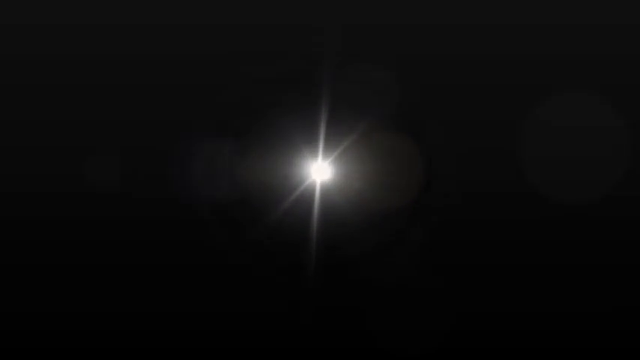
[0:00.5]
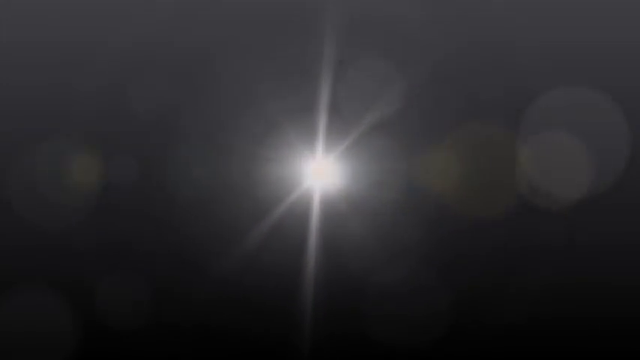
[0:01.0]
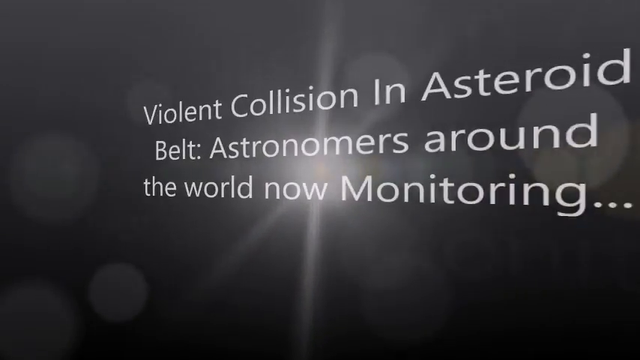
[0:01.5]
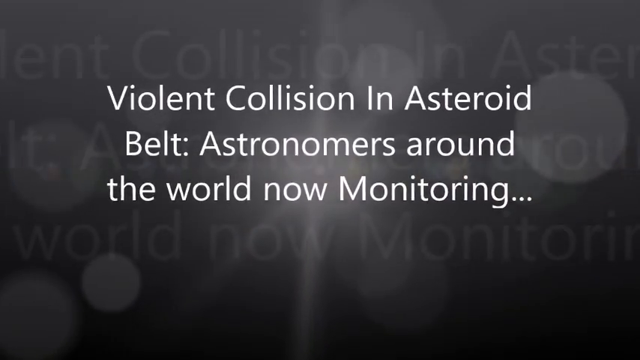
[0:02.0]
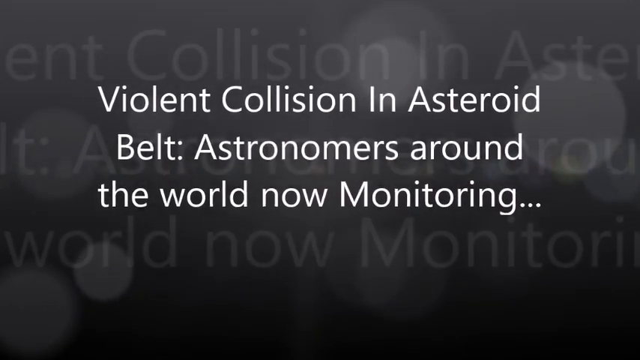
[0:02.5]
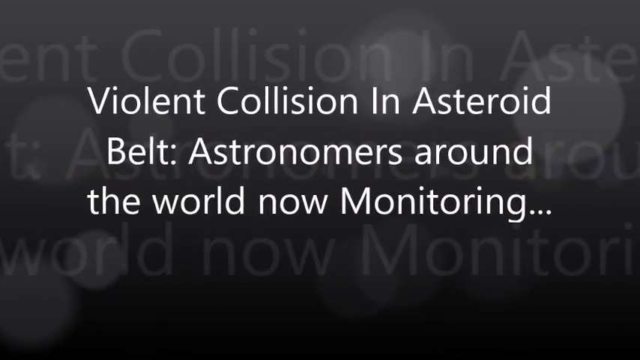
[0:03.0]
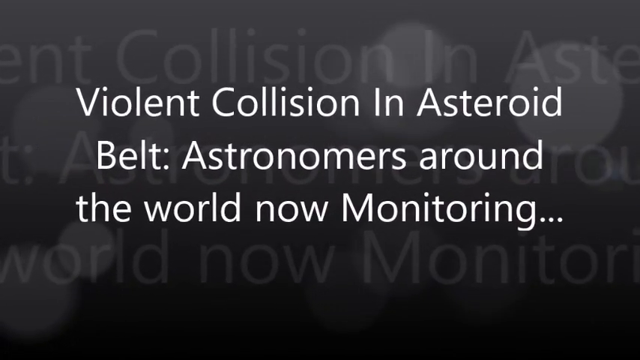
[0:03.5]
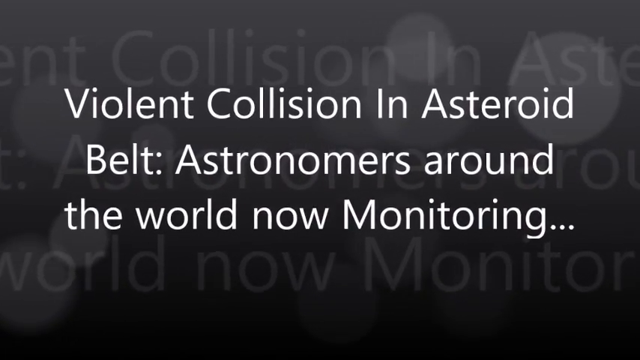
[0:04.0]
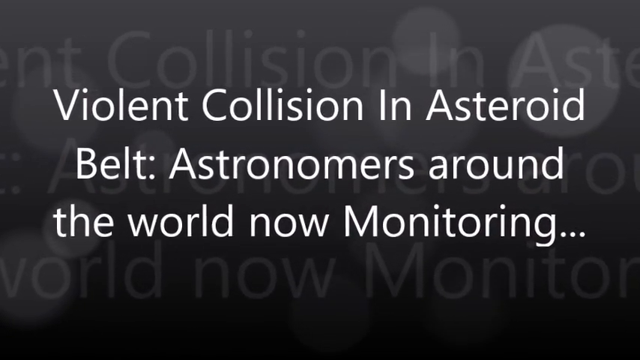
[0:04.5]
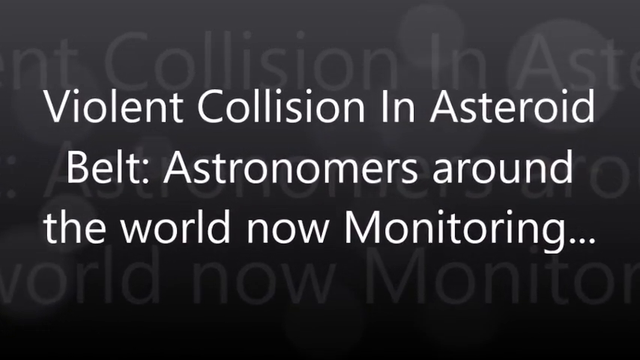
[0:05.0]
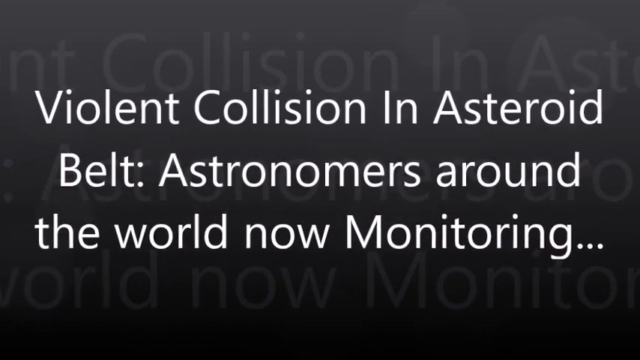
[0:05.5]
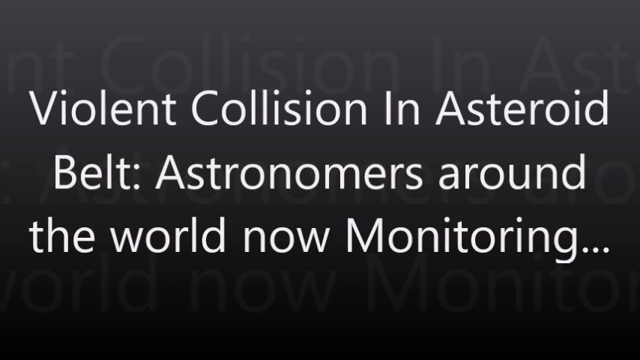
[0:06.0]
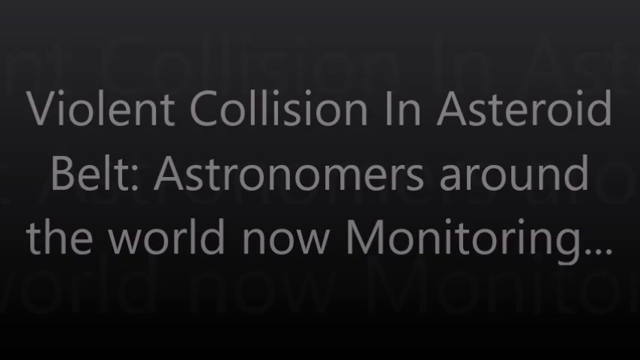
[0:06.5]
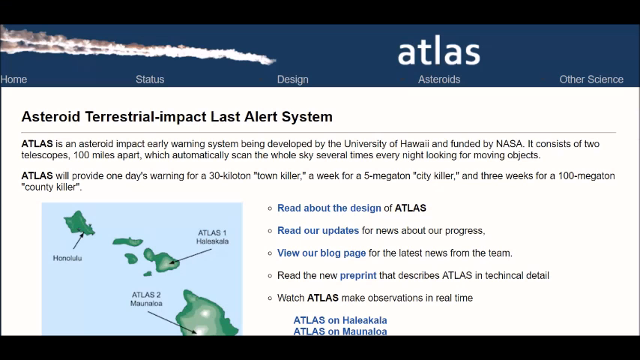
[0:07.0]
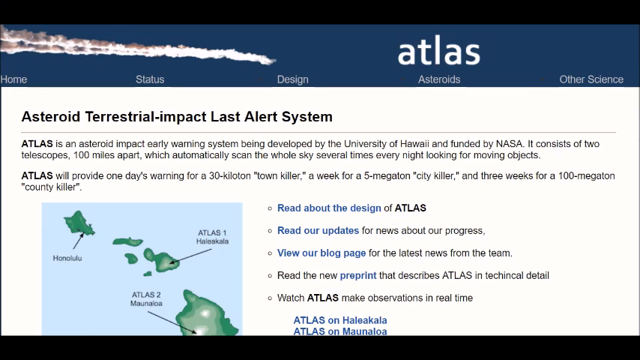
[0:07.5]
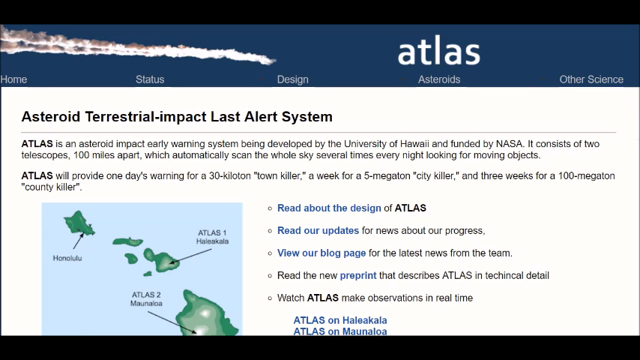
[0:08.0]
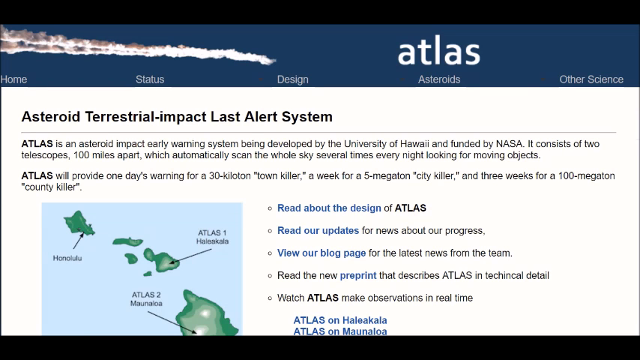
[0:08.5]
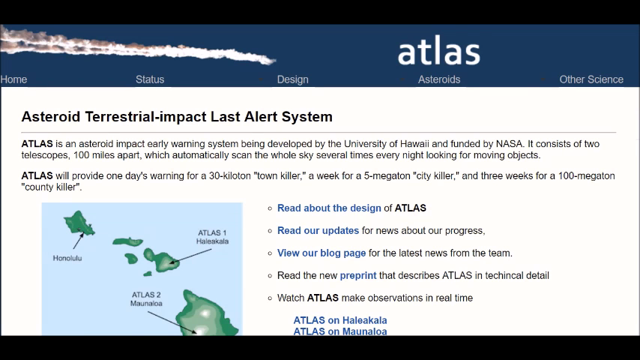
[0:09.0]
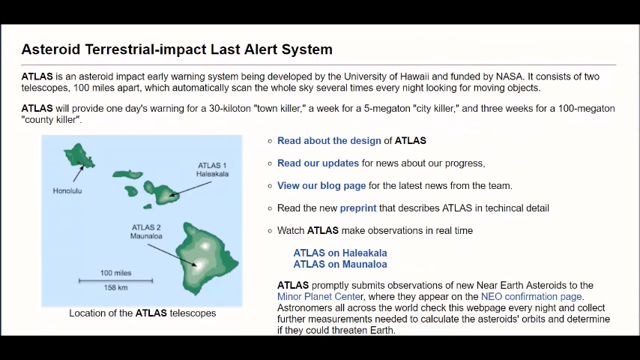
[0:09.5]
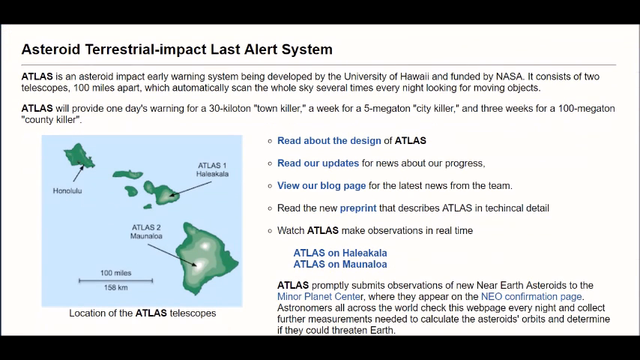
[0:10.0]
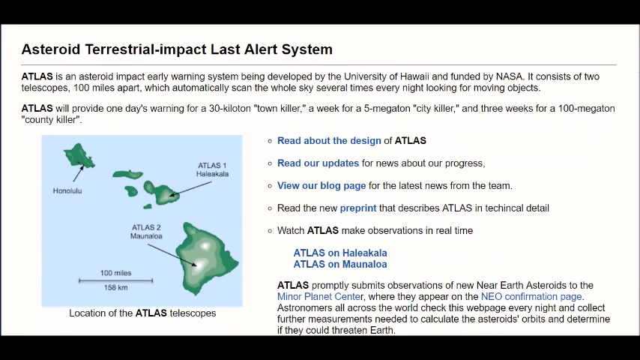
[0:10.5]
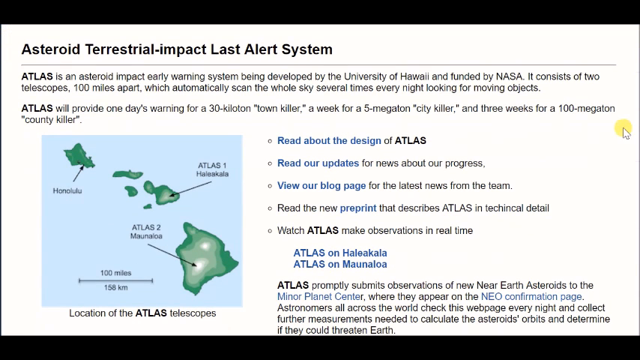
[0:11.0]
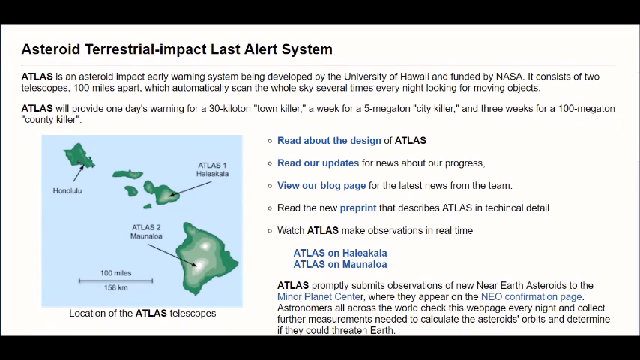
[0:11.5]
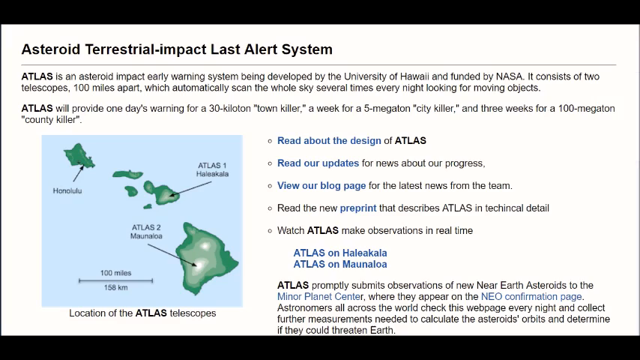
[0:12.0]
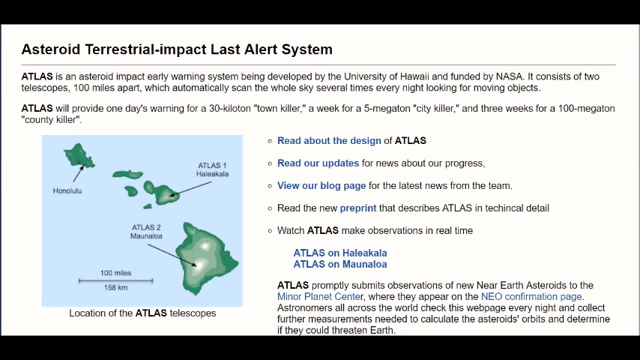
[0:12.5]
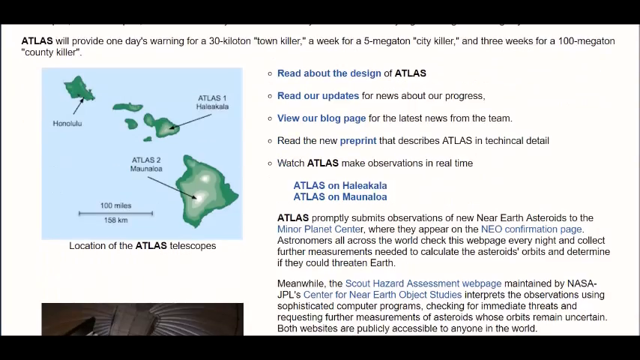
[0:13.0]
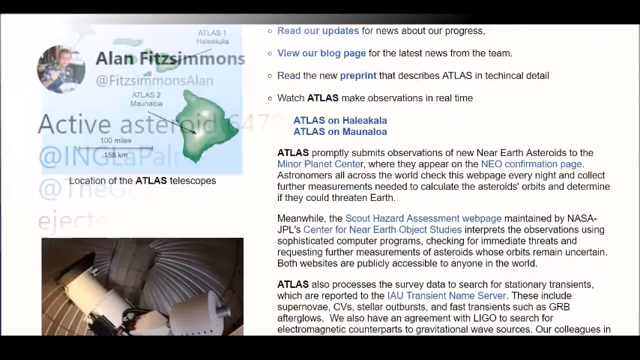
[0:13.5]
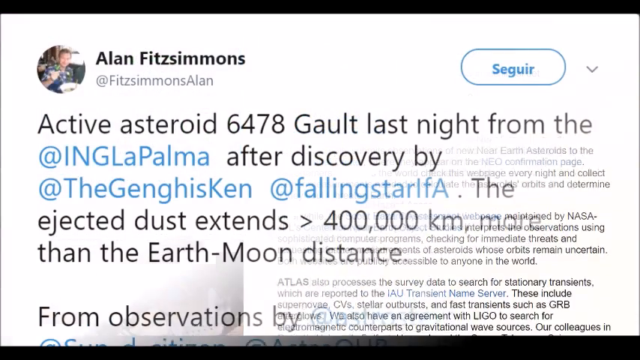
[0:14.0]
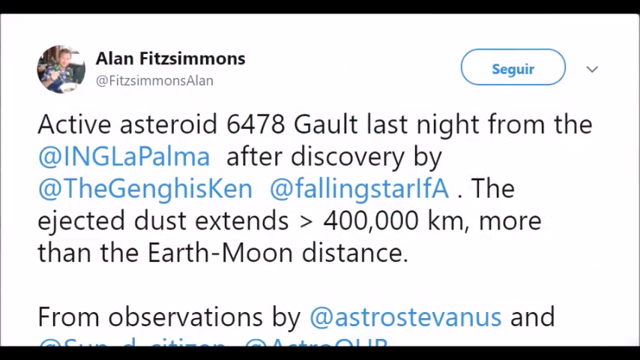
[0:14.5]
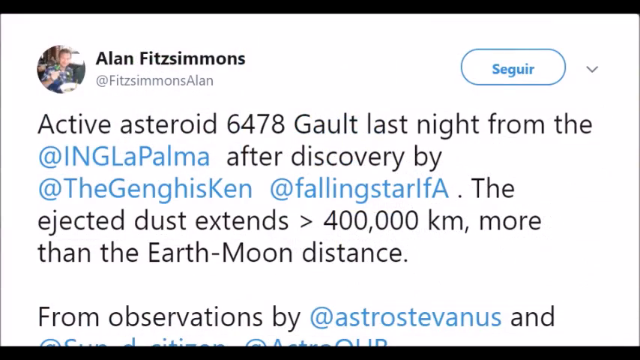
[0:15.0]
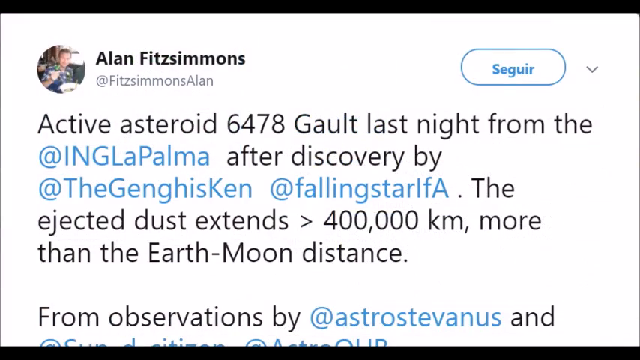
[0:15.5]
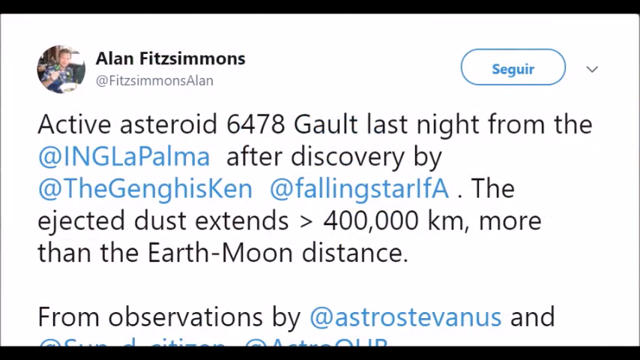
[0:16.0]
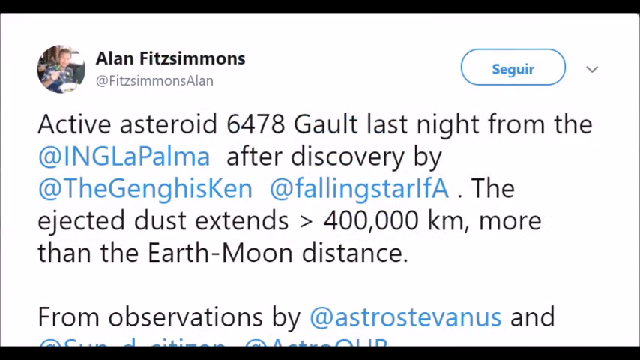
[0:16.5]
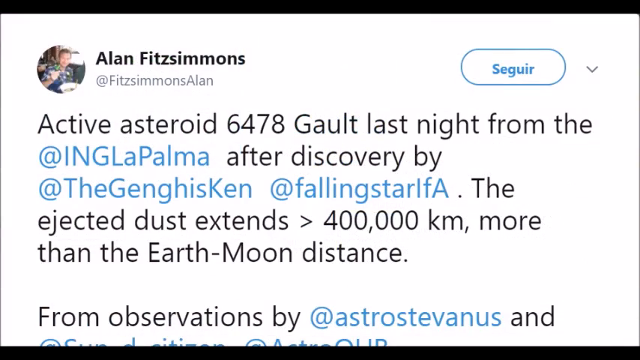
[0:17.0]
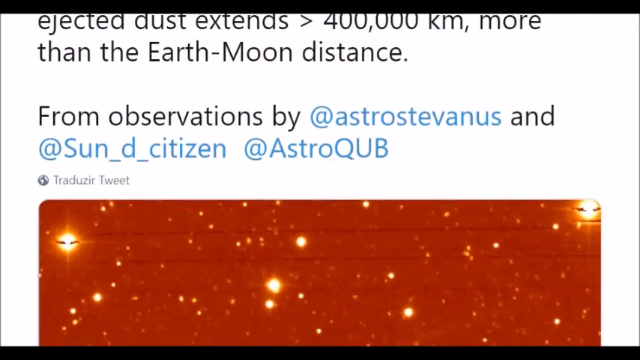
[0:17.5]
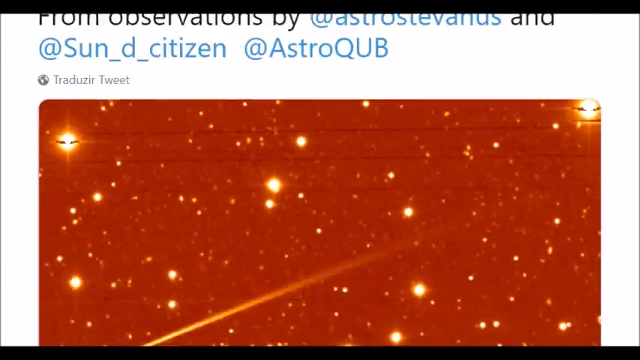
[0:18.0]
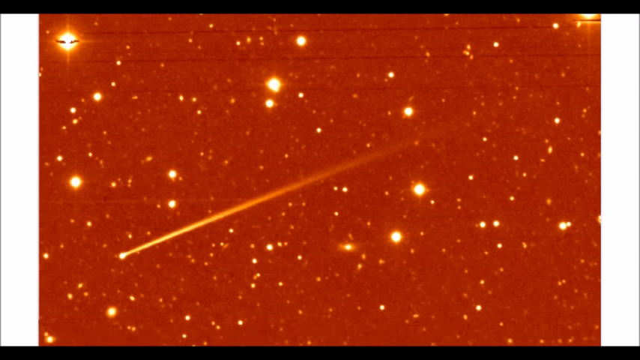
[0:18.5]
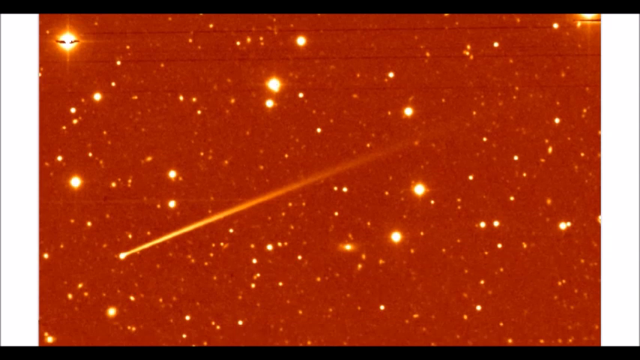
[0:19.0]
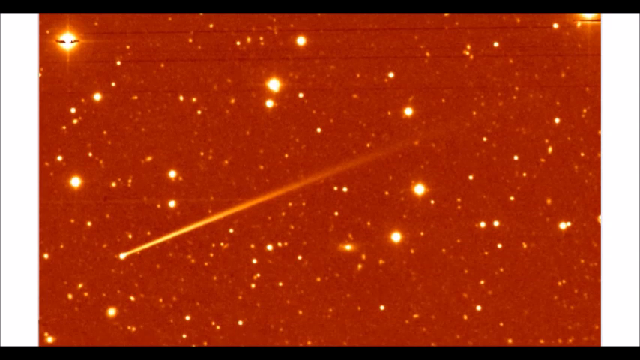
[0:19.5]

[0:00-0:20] The video opens on an all-black background with a bright light in the center. White lettering comes in from the right: "violent collision in asteroid belt astronomers around the world now monitoring." The white text is in the center, with a gray overlaid copy of the same text behind it, and it slowly comes in toward the camera. A website appears, with a blue border across the top. "Atlantis" is on the left side, with something like a chemtrail of smoke, and below that are white tabs reading "home, status, design, asteroids." Below that is a white background with "asteroid, terrestrial impact, blast alert system" across the top. Beneath it are two different sections of information, then a small map with a light blue background and green land. To the right of the map are five bullet points, some in blue and some in black. The page scrolls down a little, and below the map it says "location of the Atlas telescopes." As it scrolls down further, a tweet pops up from Alan Fitzsimmons @FitzsimmonsAlan, with a profile picture on the left and text in a foreign language underneath about the active asteroid; three people are tagged. The page scrolls down to a red background of space where an asteroid flies from the right down toward the left corner, with big bright stars scattered throughout the picture.